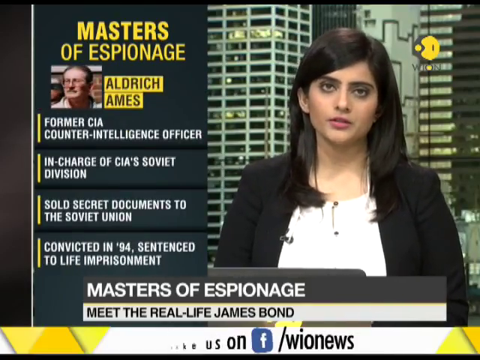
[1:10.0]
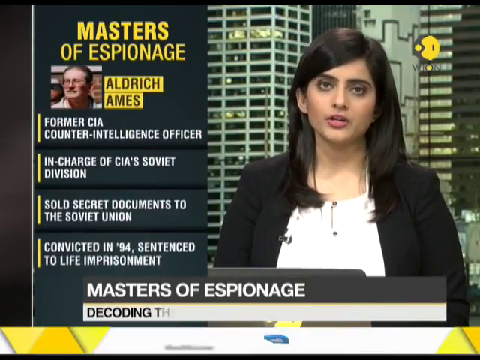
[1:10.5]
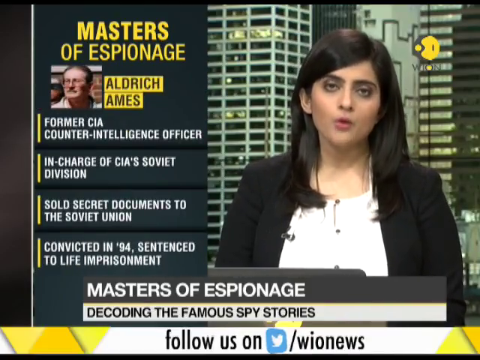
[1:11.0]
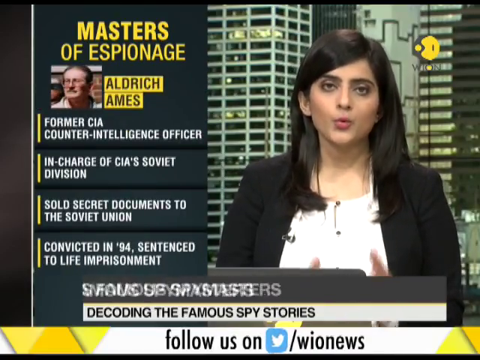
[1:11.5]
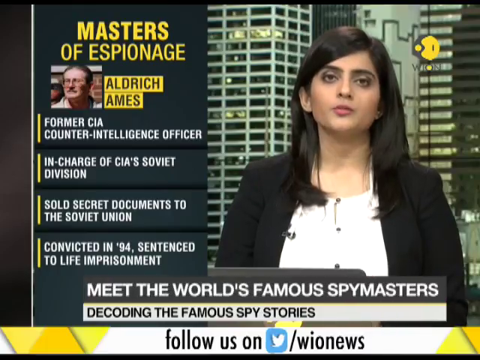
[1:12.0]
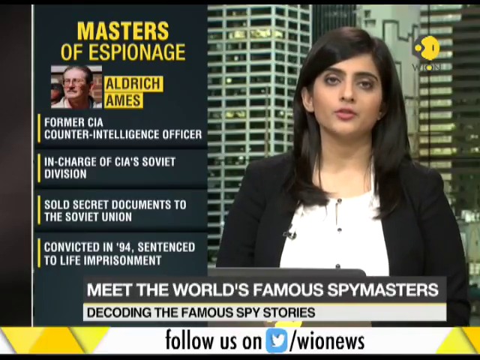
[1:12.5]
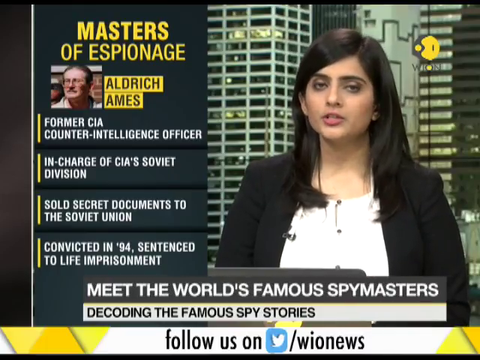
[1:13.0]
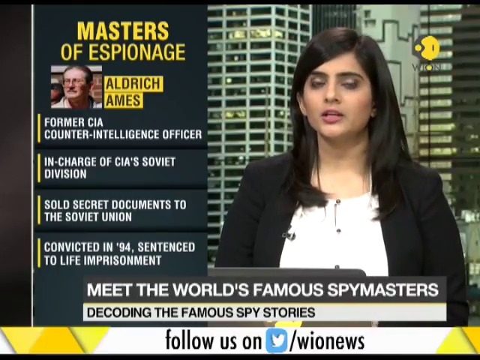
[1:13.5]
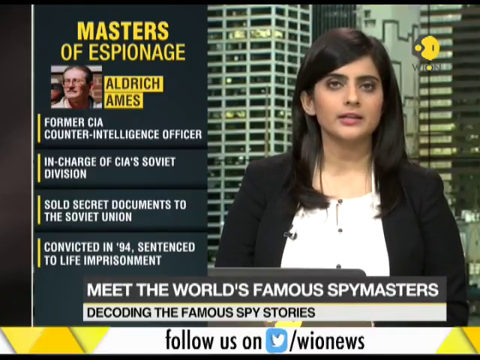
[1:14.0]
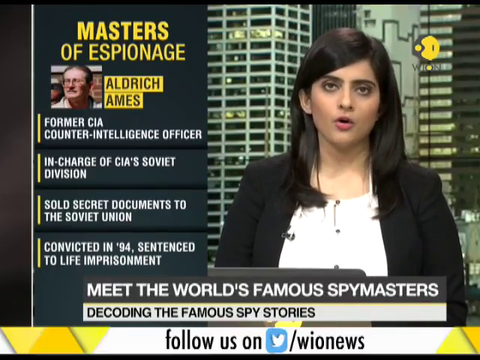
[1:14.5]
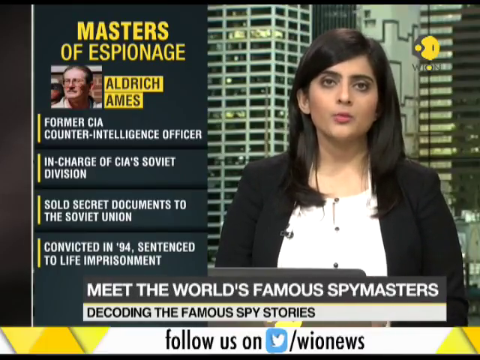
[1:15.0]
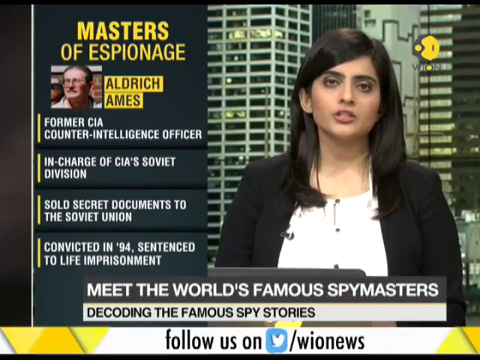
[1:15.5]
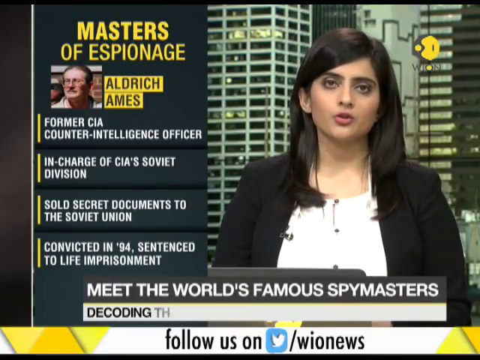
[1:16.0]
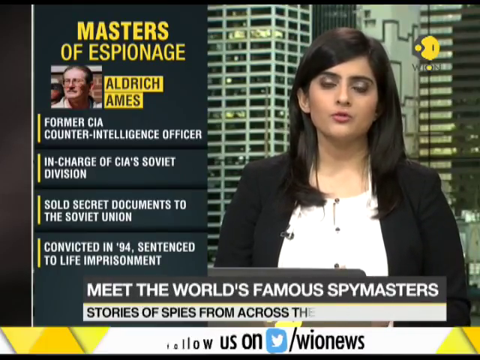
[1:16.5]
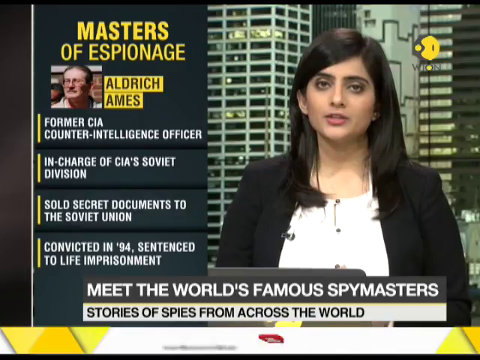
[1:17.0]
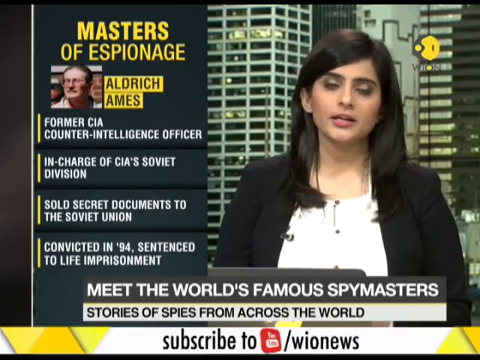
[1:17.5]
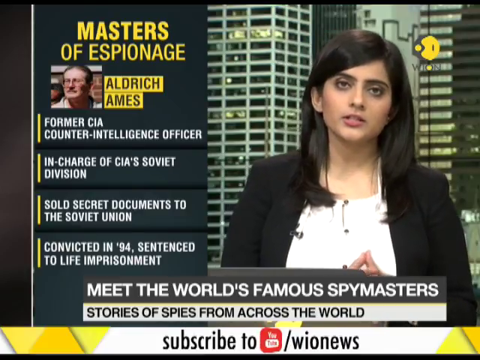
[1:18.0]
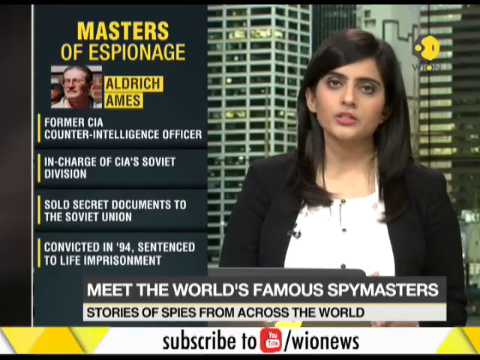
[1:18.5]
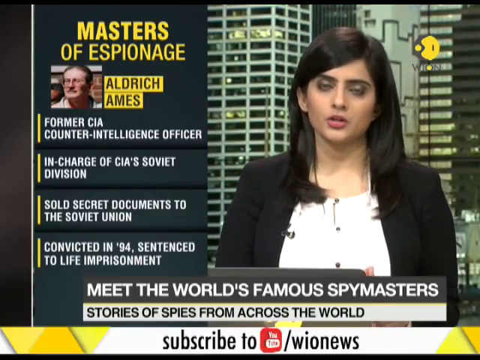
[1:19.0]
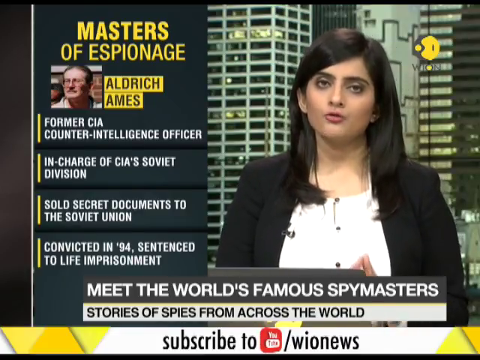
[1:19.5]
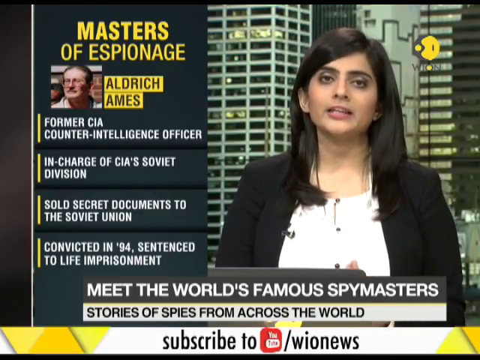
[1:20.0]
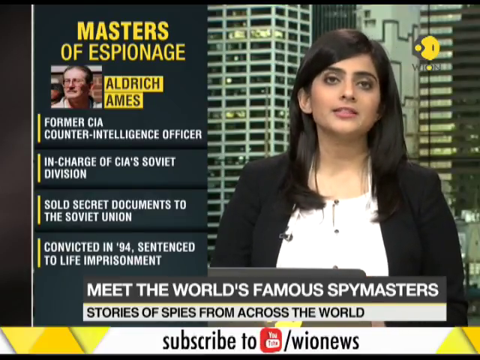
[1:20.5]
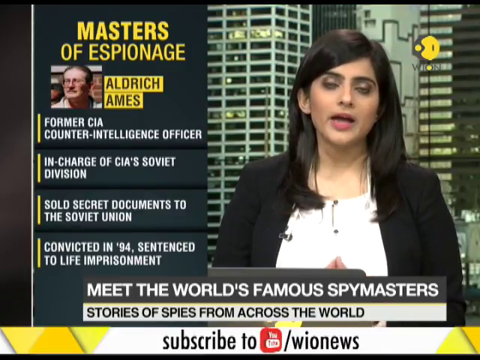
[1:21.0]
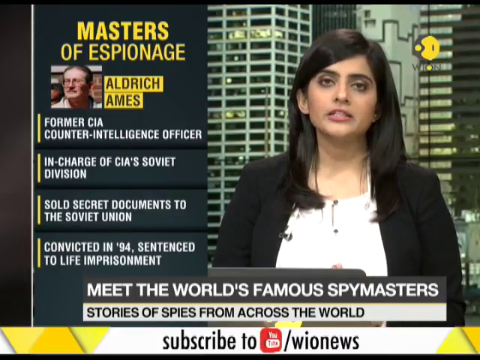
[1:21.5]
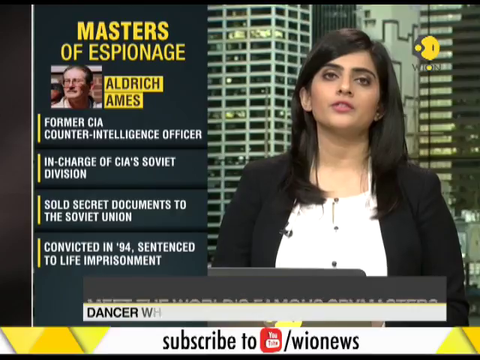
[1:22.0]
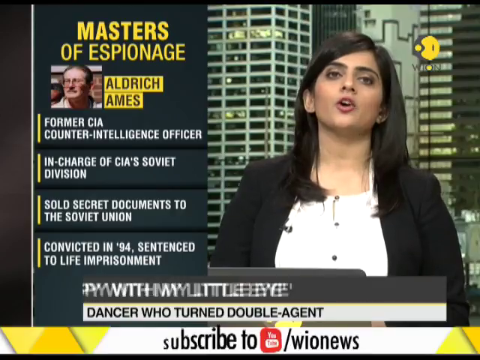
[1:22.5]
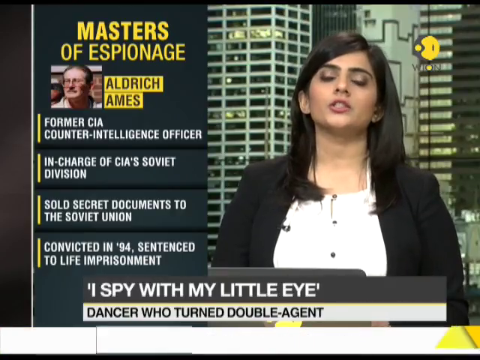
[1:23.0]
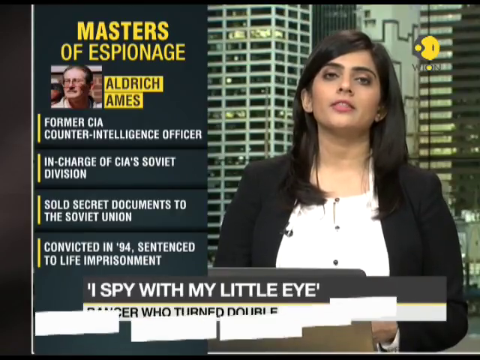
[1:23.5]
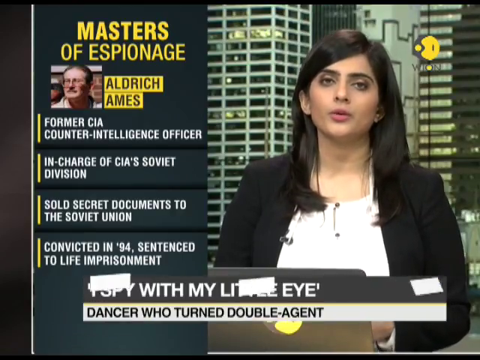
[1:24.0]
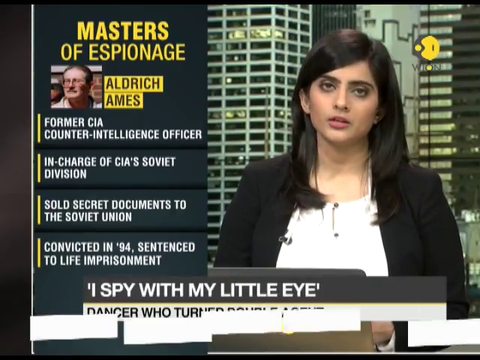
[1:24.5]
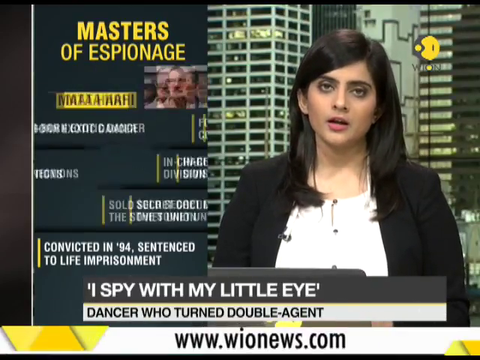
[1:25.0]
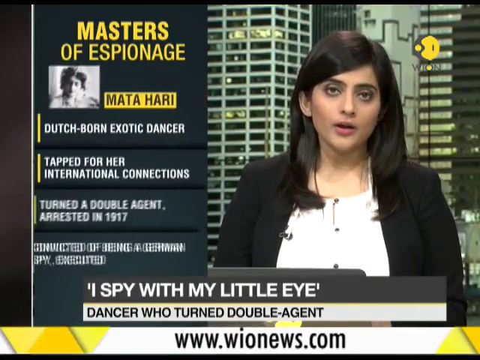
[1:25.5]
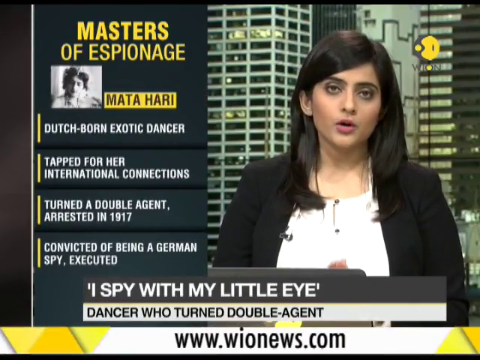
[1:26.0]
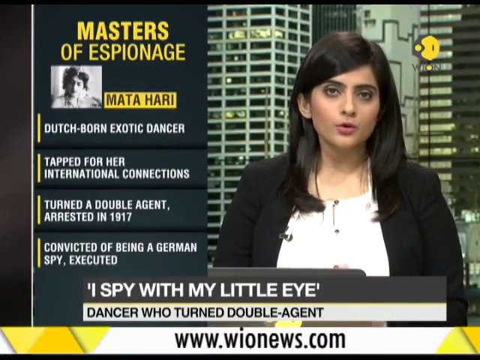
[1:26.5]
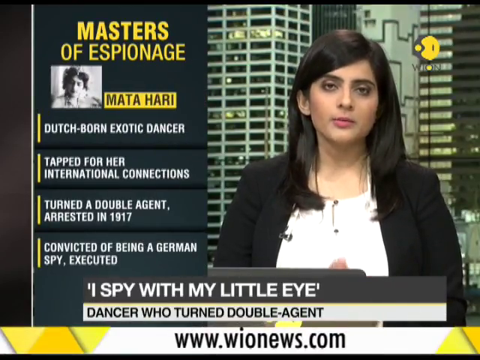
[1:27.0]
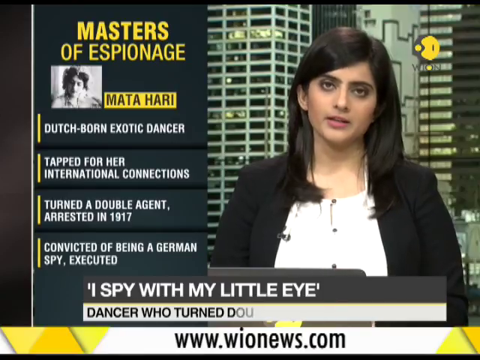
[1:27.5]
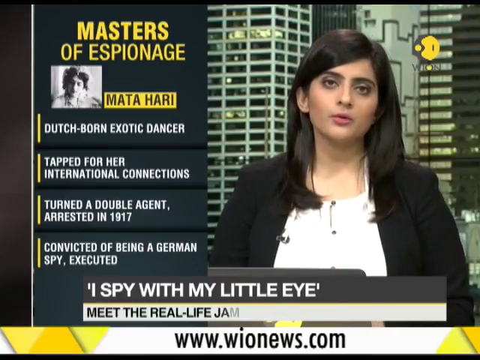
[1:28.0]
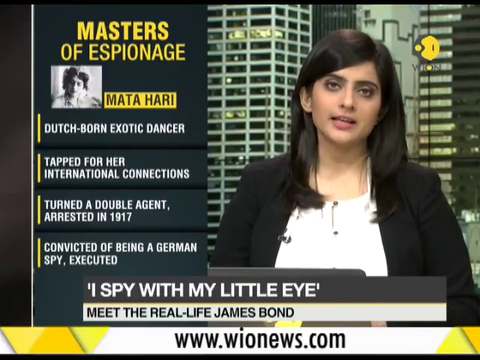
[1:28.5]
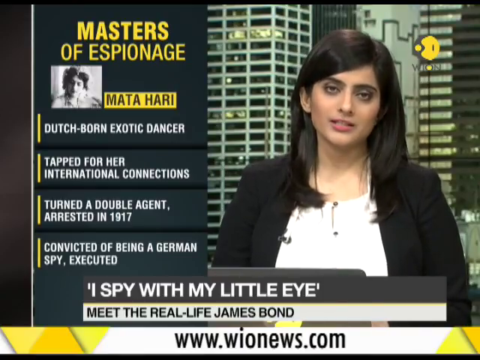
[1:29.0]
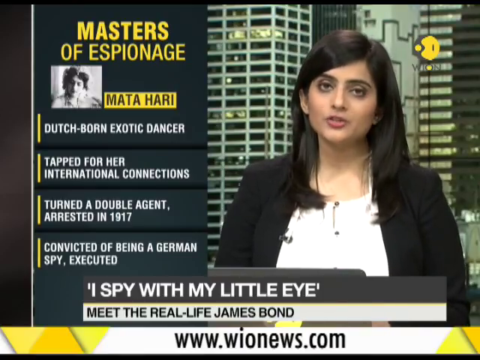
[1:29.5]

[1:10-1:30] A woman with long brown hair wears a black jacket, a white top and a small black microphone clipped to her jacket. She speaks into the camera in front of a large city view with tall buildings. Bottom labels read "Meet the world's famous spy masters" and, below, "Decoding the famous spy stories." A section of the screen reads "Masters of espionage" and shows a man's face with the name "Aldrich Ames" and facts listed below. As she keeps talking, the bottom changes to "Stories of spies from across the world." The upper section still reads "Masters of espionage," but the picture changes to what looks like a woman in a black and white photograph, named "Mata Hari," with facts listed below her name.